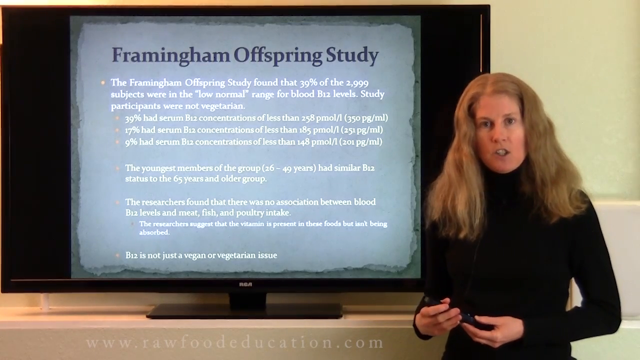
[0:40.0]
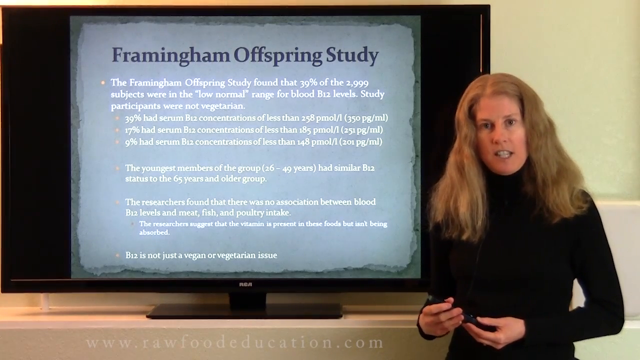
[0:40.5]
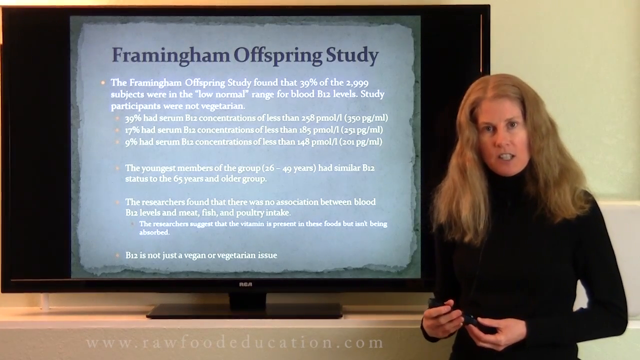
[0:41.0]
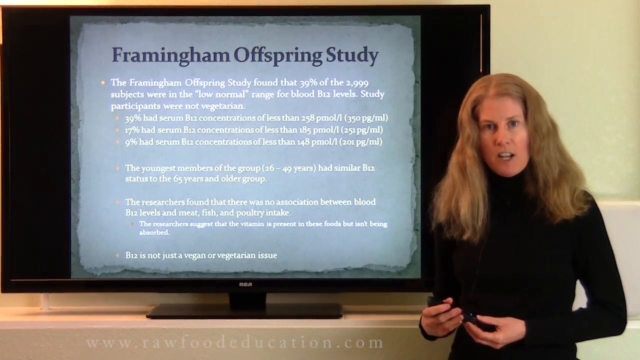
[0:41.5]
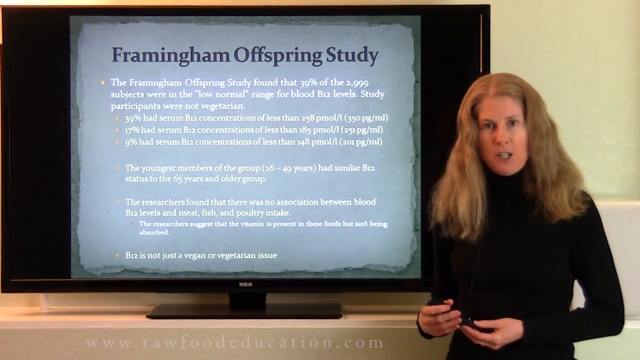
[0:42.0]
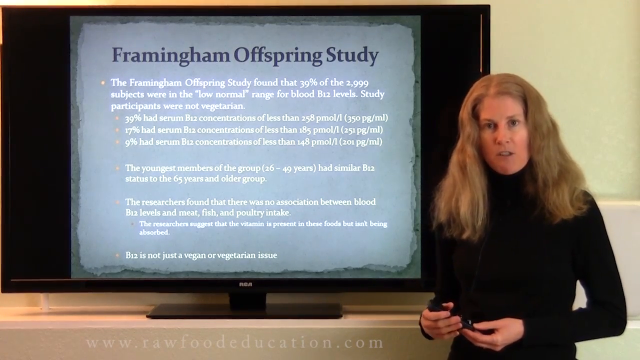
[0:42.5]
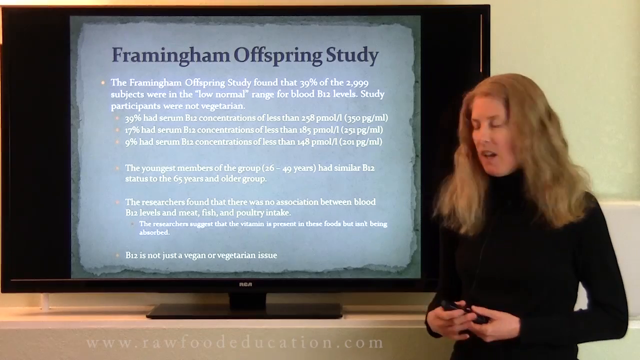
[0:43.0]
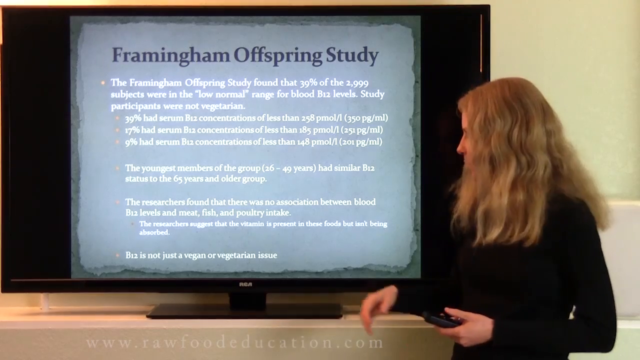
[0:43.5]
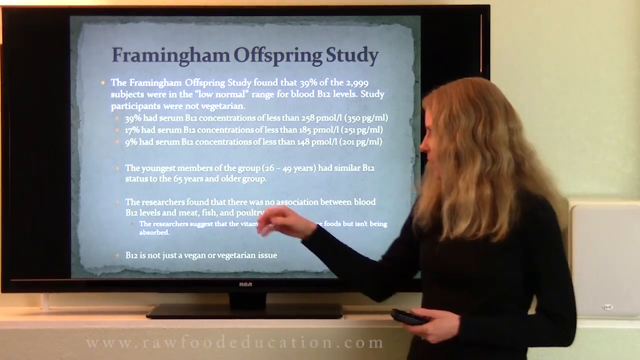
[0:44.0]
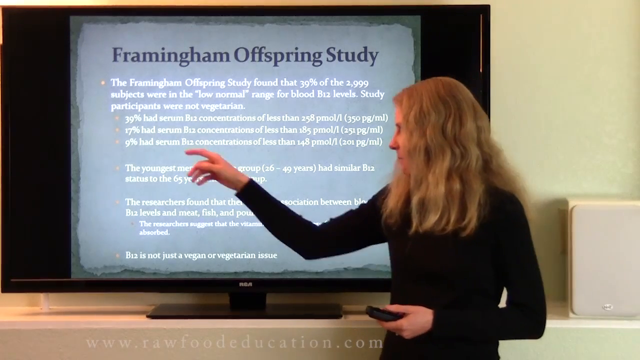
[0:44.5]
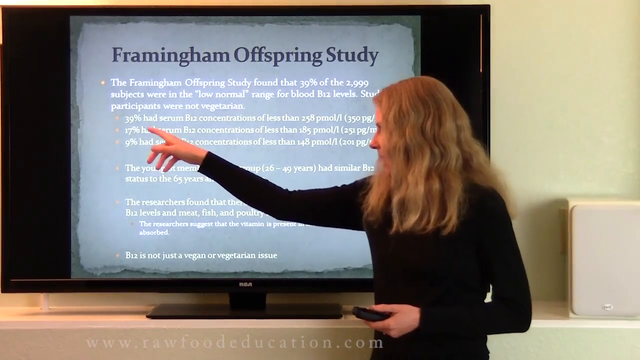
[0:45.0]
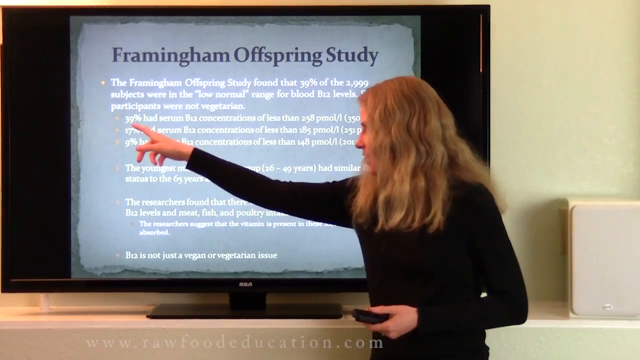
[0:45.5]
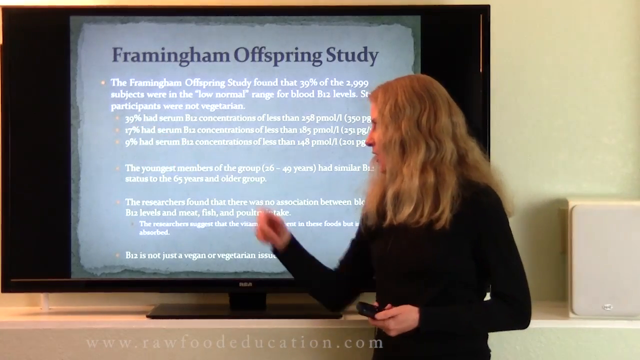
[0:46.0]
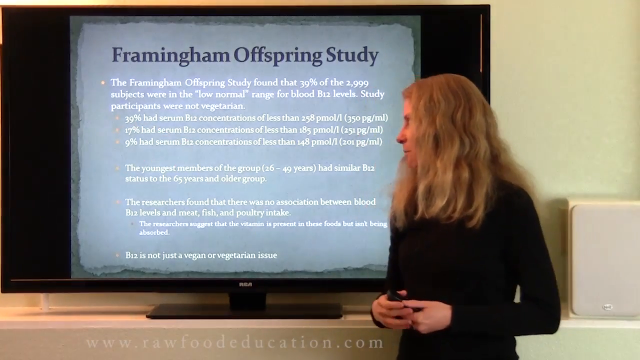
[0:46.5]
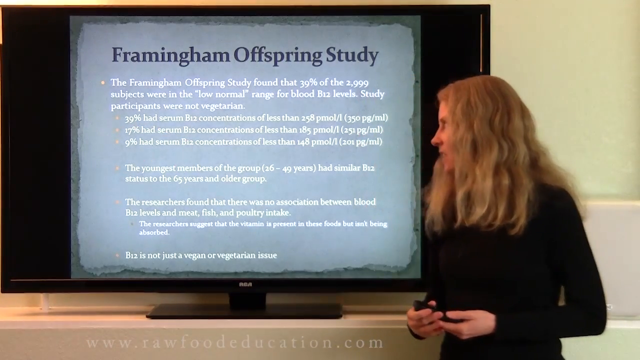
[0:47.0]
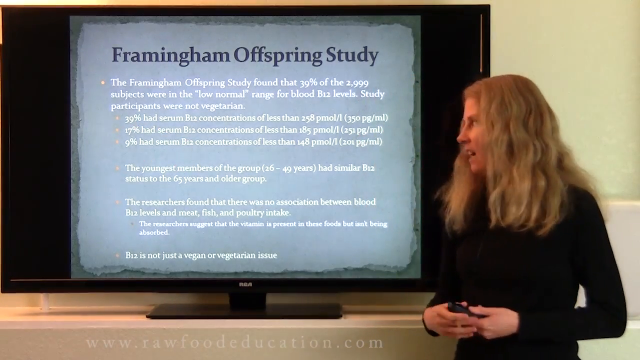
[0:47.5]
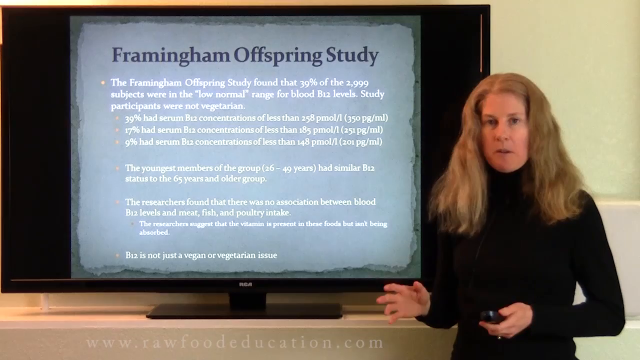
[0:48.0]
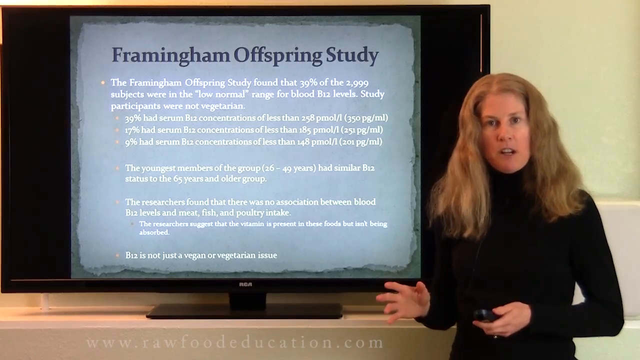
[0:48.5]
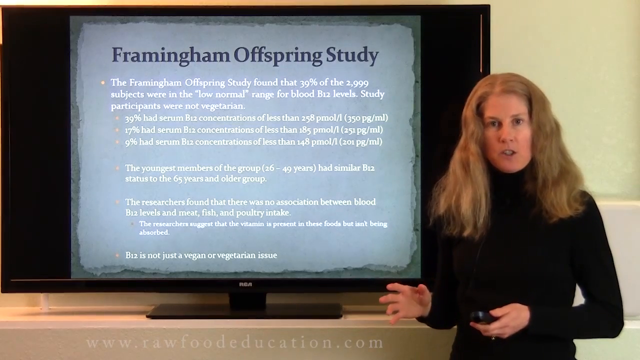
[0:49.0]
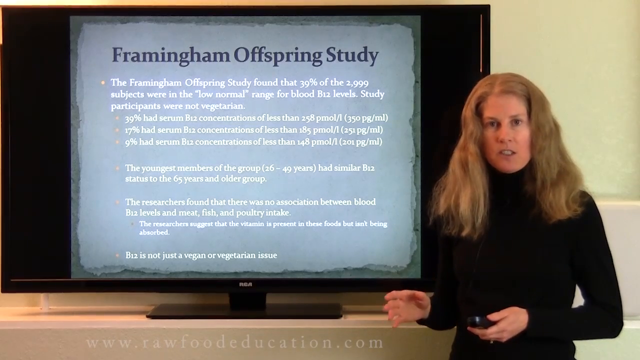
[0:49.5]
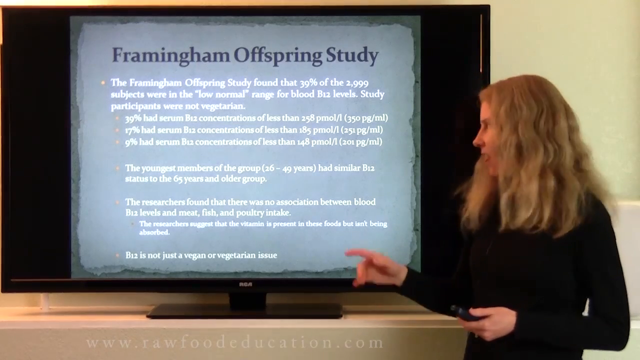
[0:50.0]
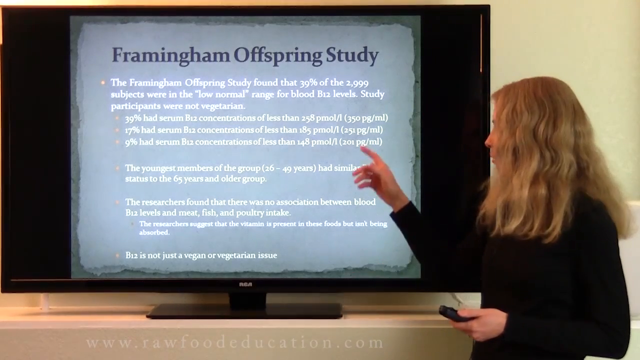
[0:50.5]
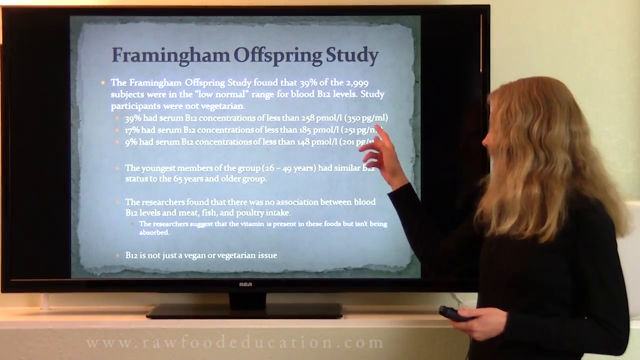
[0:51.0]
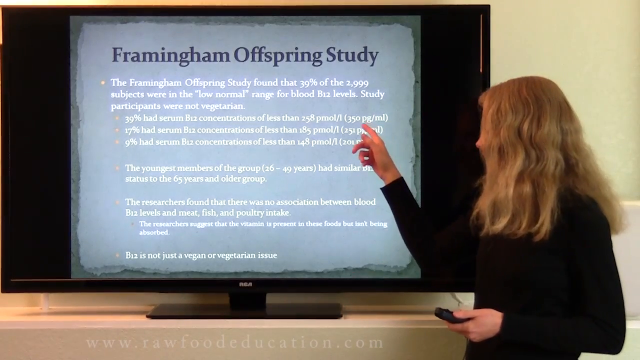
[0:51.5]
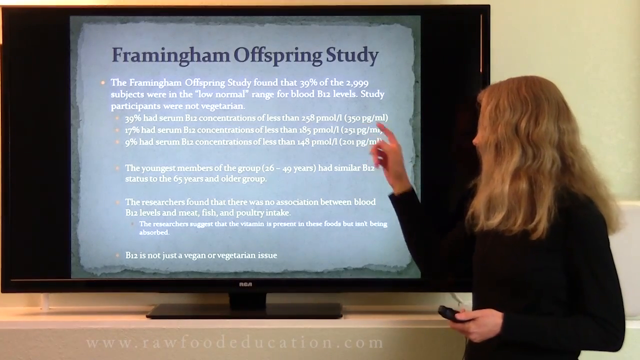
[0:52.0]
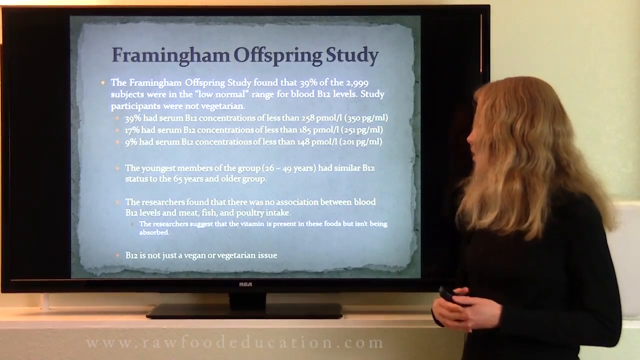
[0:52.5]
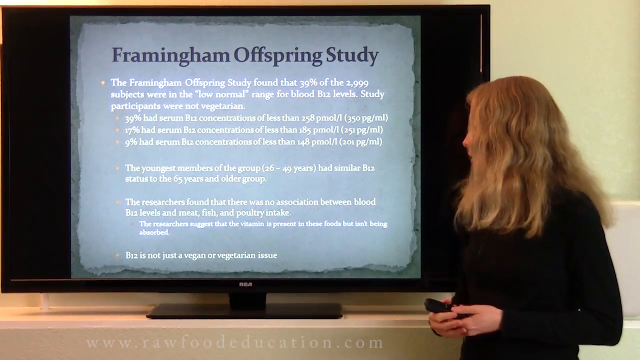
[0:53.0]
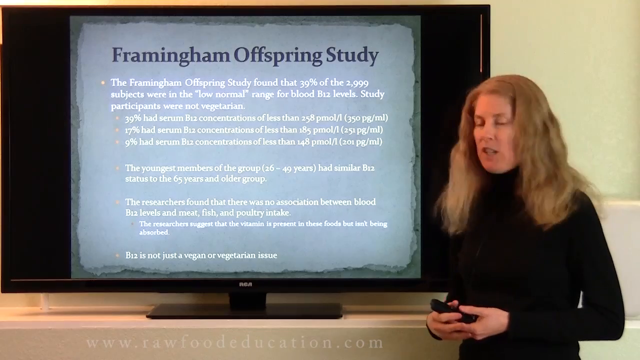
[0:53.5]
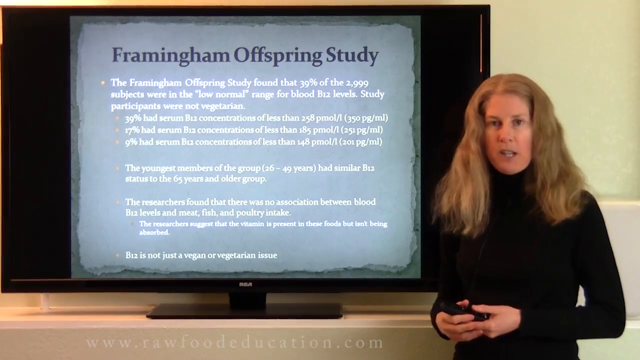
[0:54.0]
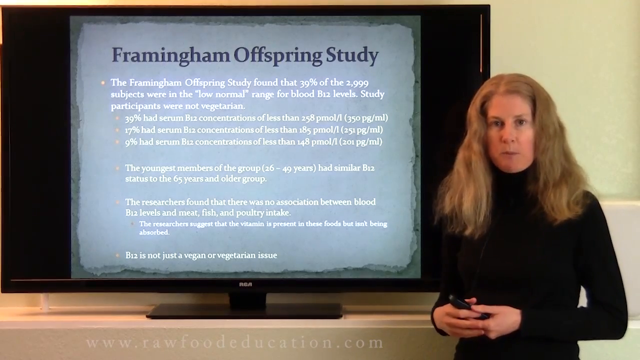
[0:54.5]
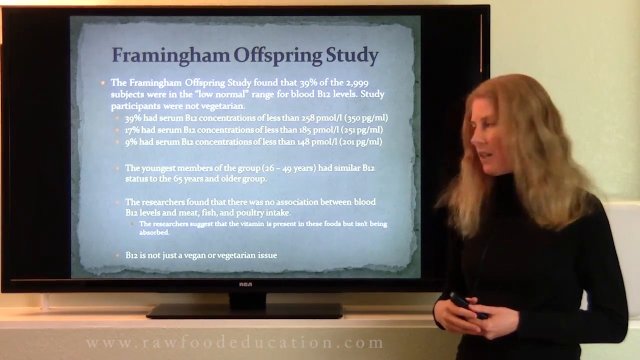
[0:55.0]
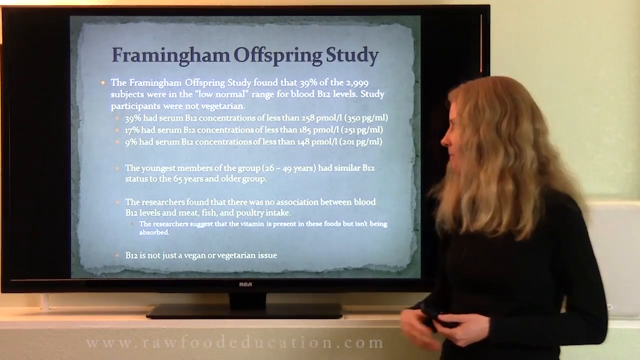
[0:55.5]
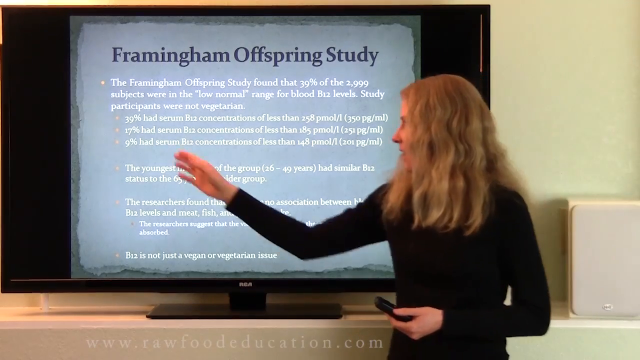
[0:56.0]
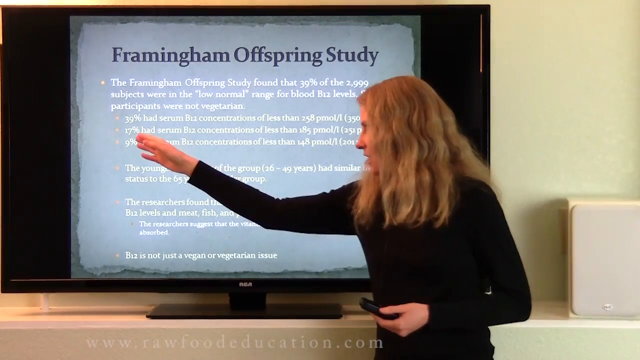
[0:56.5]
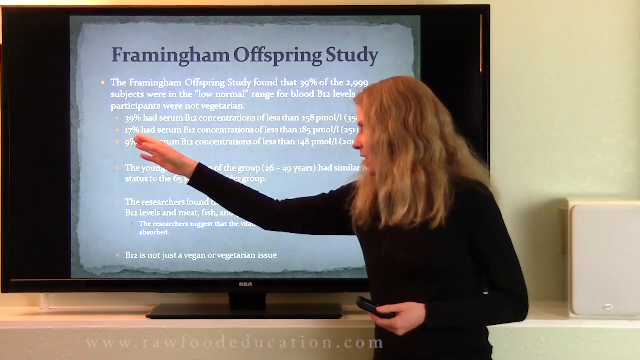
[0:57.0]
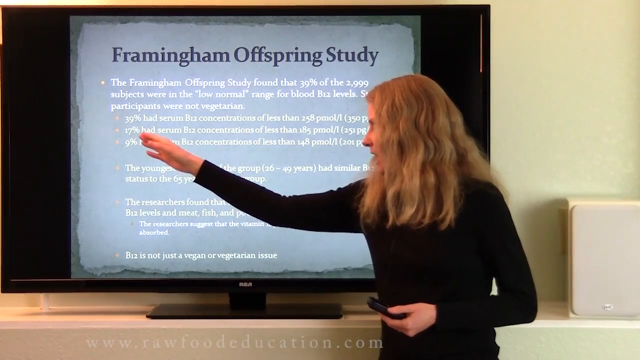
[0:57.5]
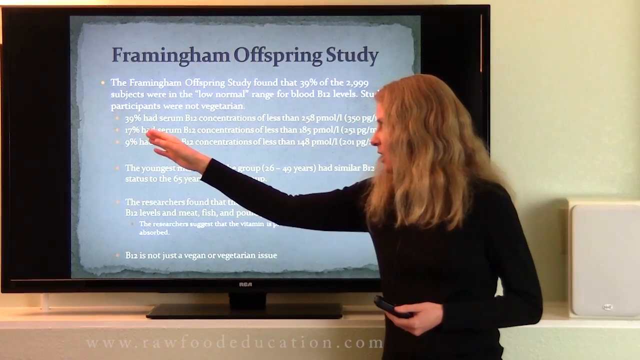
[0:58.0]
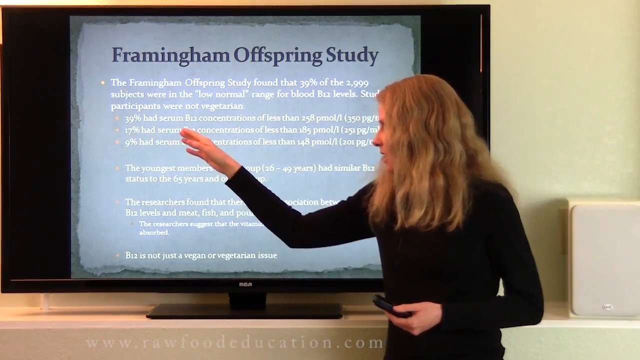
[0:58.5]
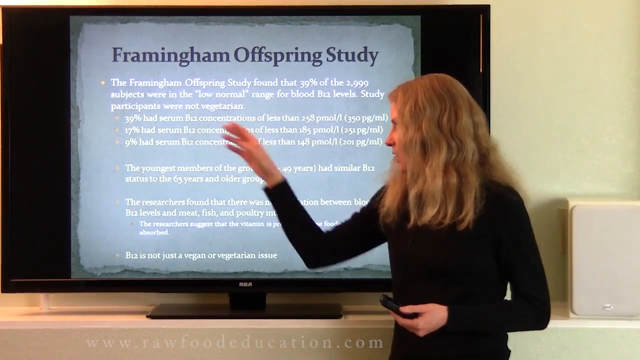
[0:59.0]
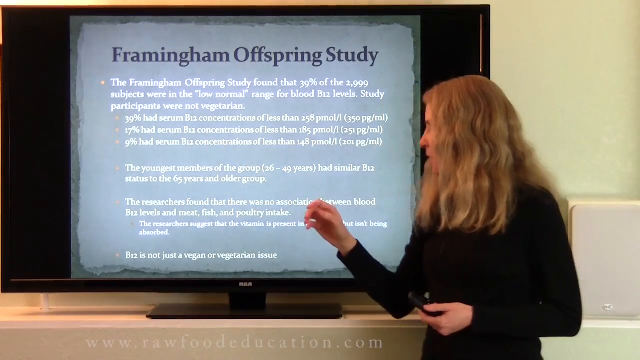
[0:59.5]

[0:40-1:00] The Framingham Offspring Study information remains on the screen behind the woman, who is probably around 40, Caucasian, with mixed, kind of dirty blonde hair and a black sweater. She points to different pieces of information on the screen, such as "30% had serum" concentrations below a level given in pg/milliliters, and information showing that the youngest members of the group, aged 36 to 40, had levels similar to those of 65-year-olds in the older groups. No other people appear, and the page on the screen does not change.